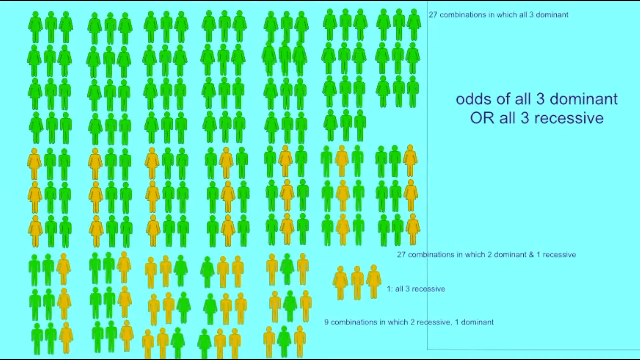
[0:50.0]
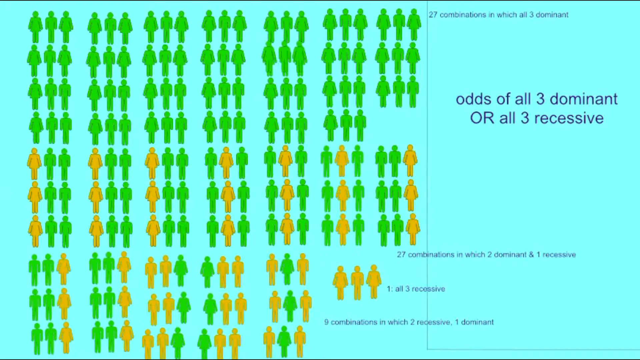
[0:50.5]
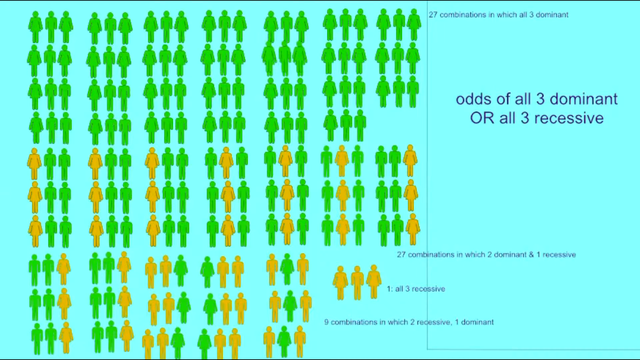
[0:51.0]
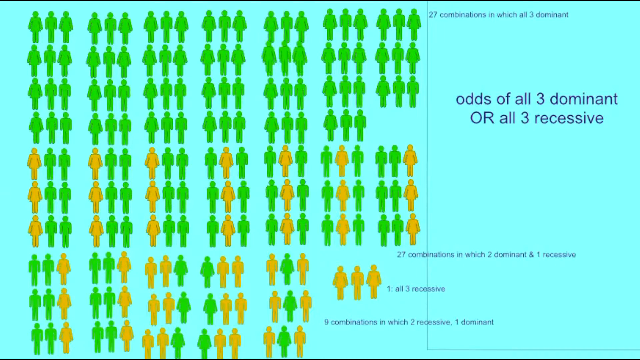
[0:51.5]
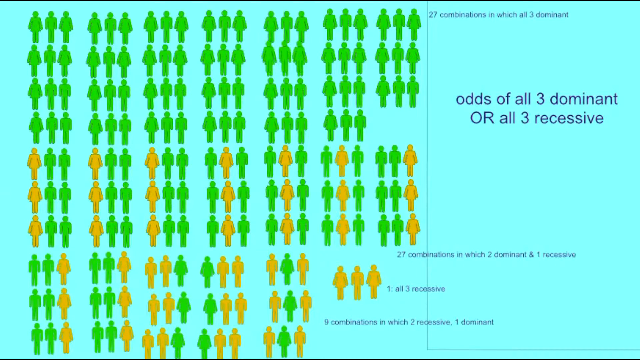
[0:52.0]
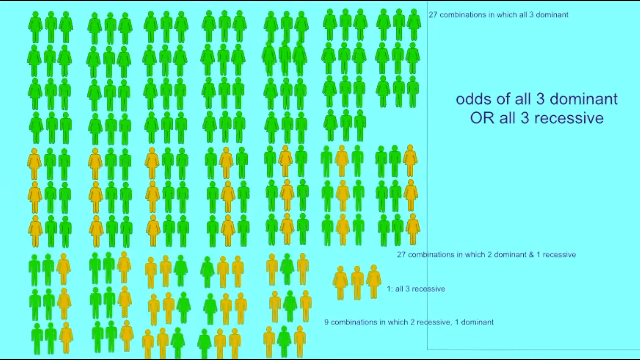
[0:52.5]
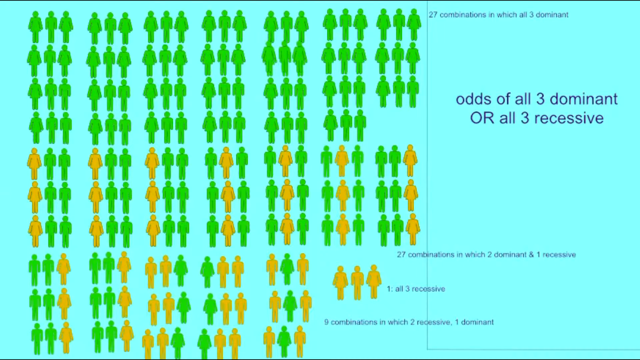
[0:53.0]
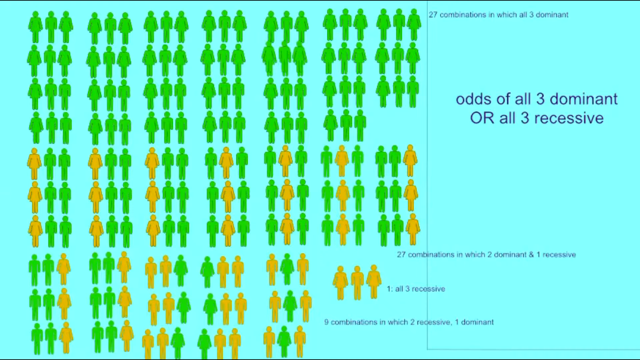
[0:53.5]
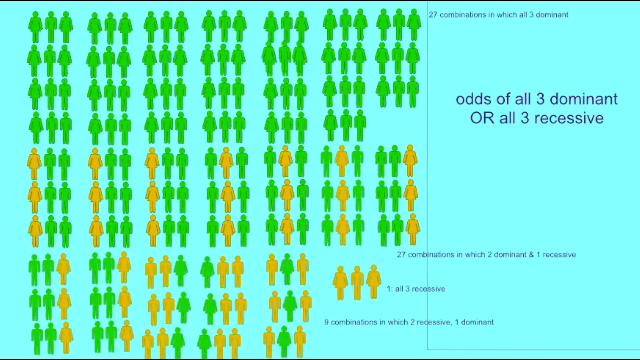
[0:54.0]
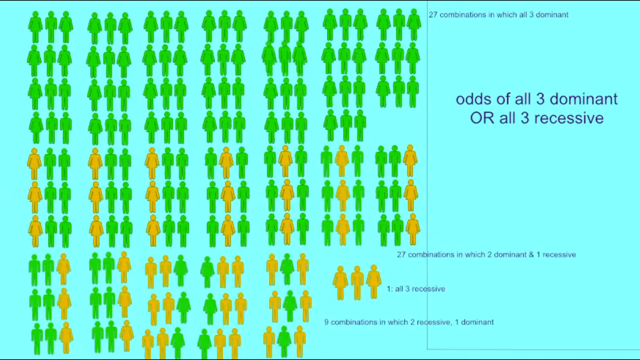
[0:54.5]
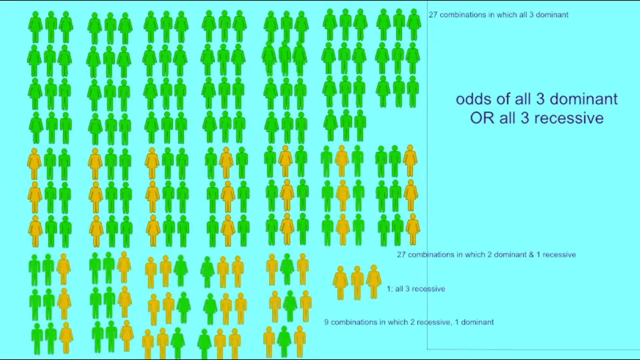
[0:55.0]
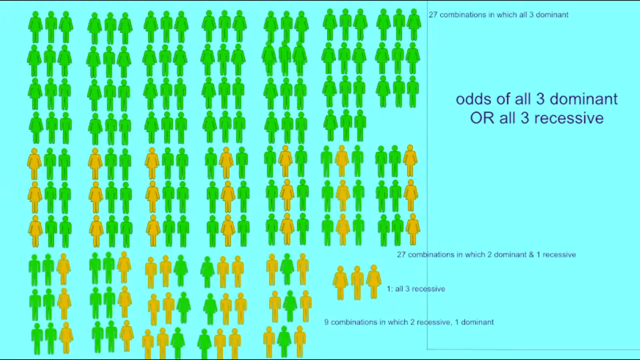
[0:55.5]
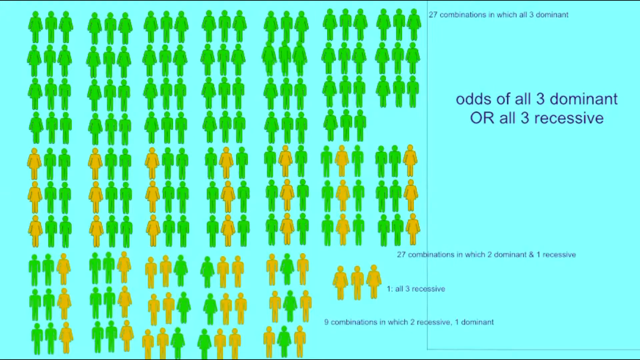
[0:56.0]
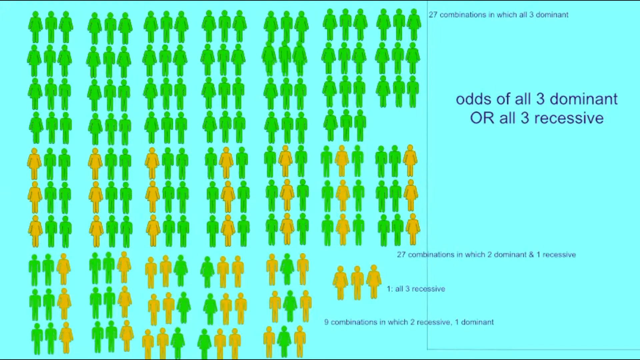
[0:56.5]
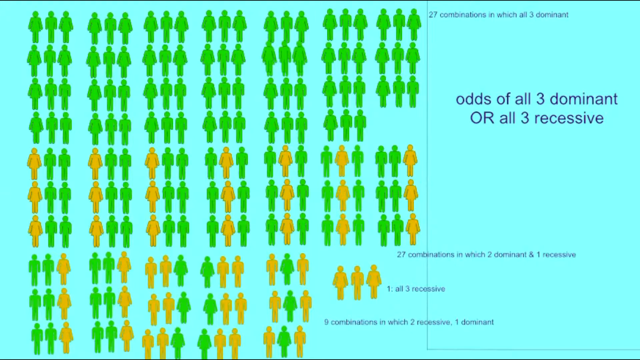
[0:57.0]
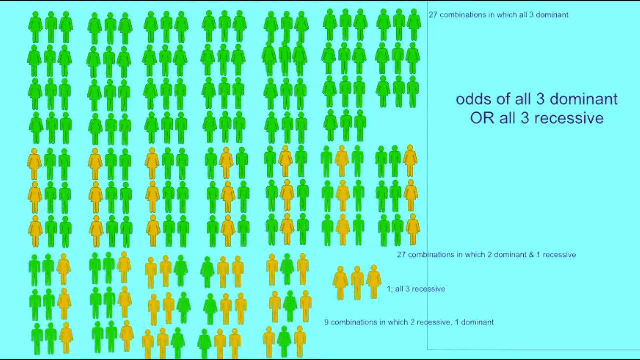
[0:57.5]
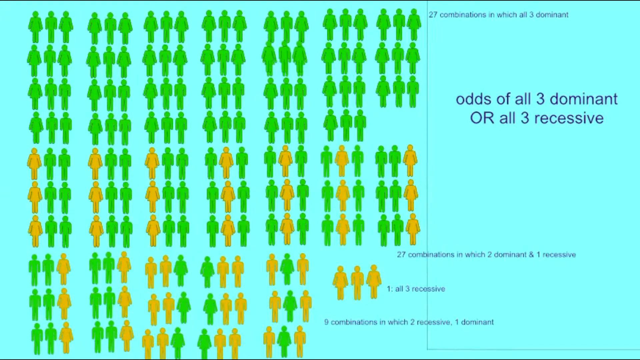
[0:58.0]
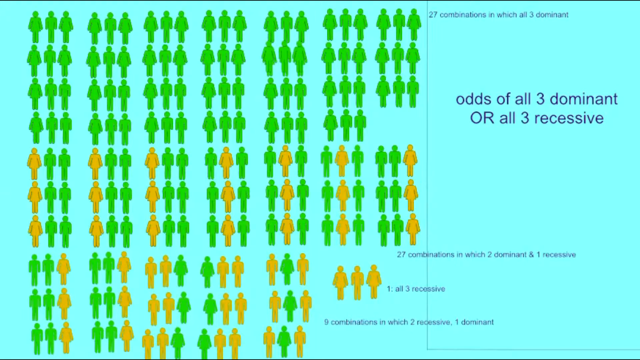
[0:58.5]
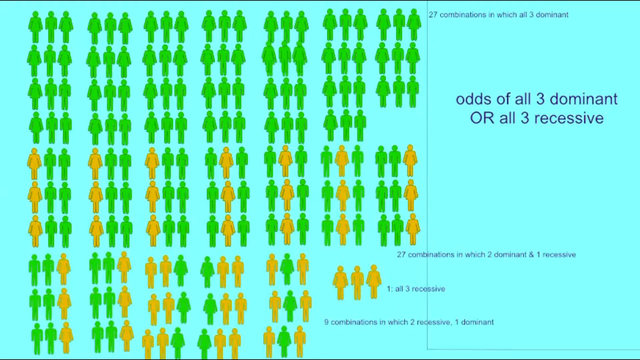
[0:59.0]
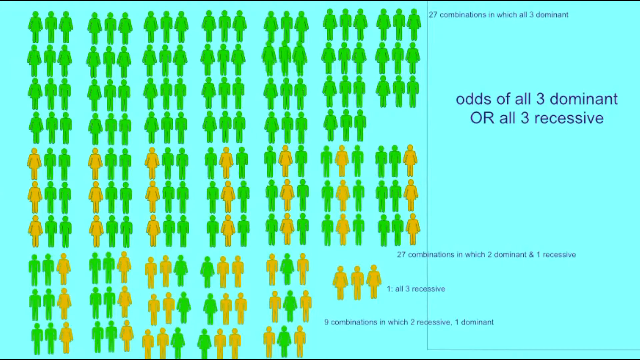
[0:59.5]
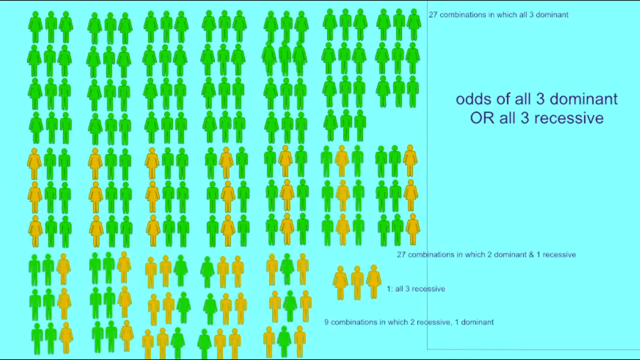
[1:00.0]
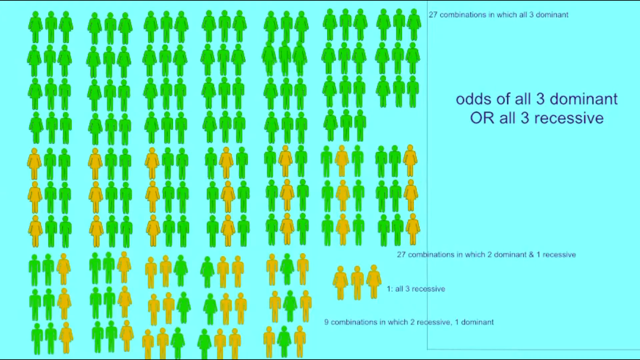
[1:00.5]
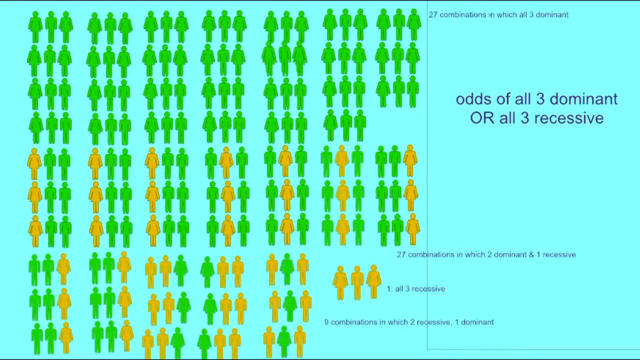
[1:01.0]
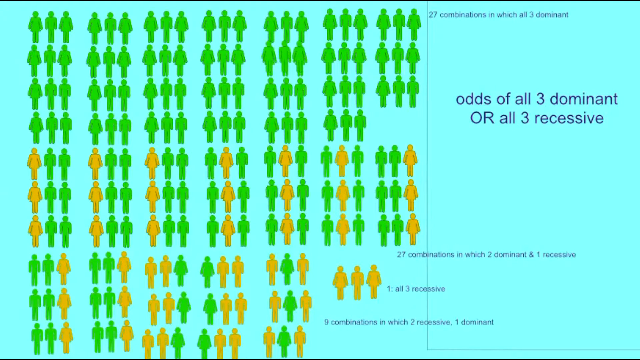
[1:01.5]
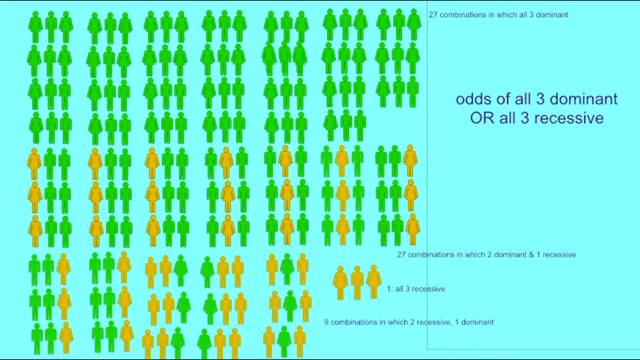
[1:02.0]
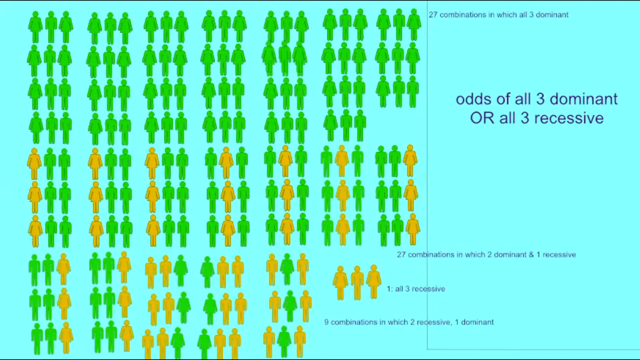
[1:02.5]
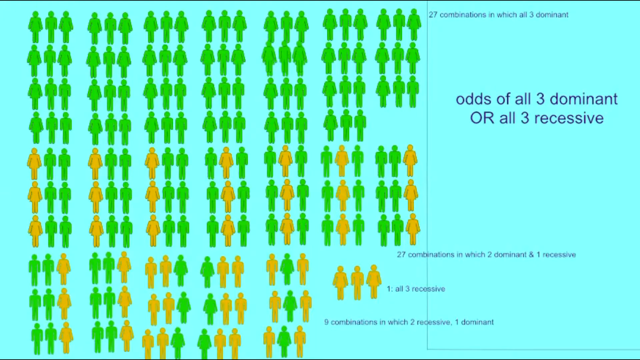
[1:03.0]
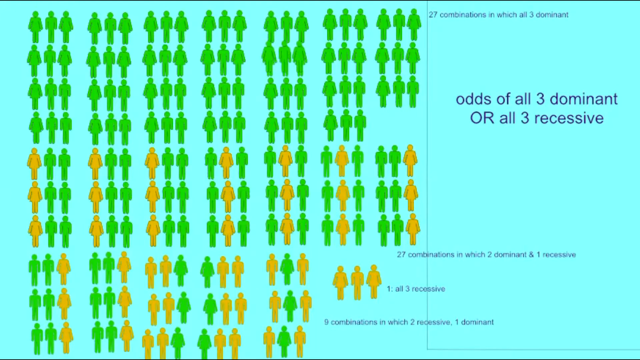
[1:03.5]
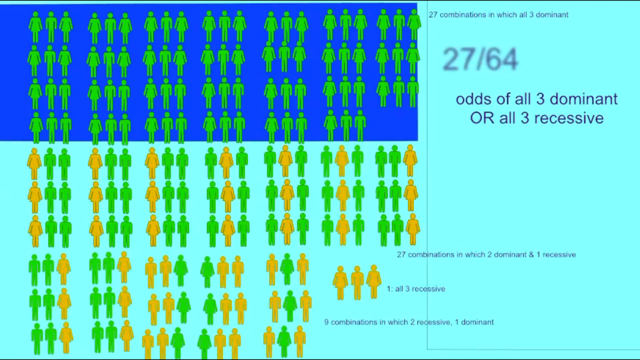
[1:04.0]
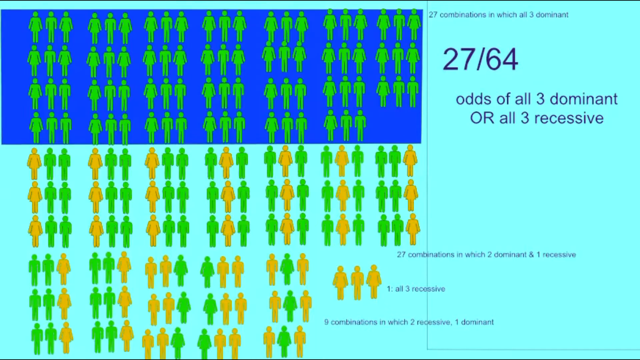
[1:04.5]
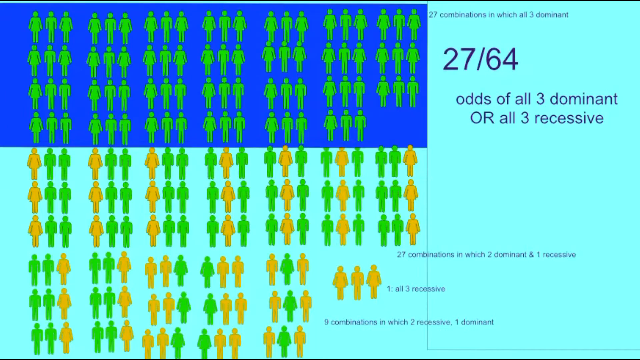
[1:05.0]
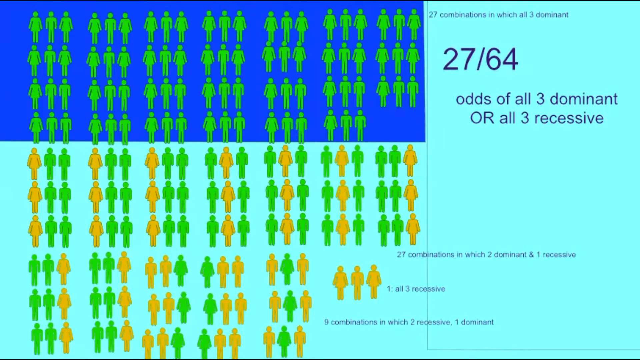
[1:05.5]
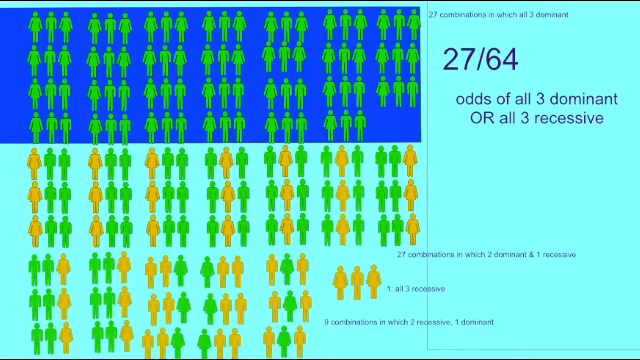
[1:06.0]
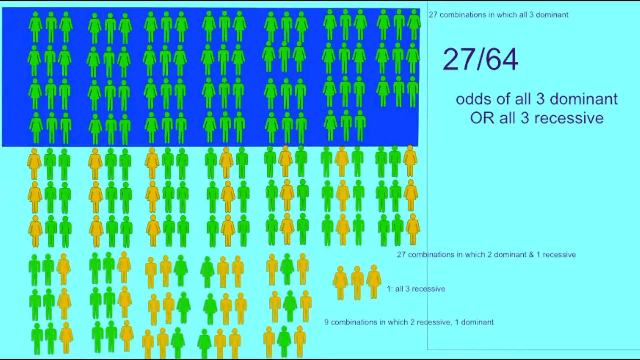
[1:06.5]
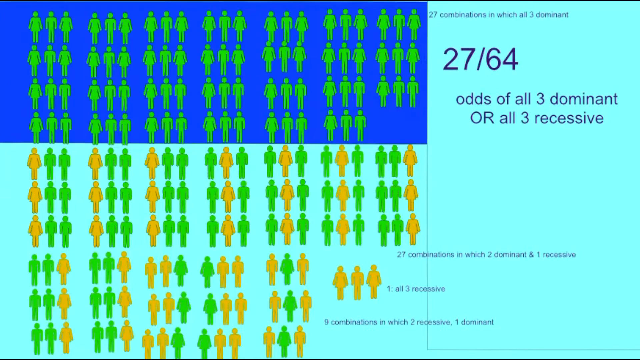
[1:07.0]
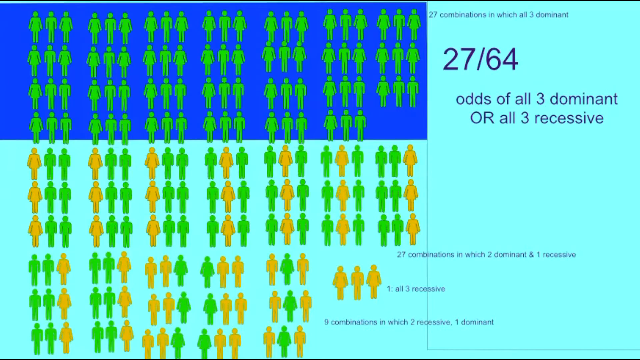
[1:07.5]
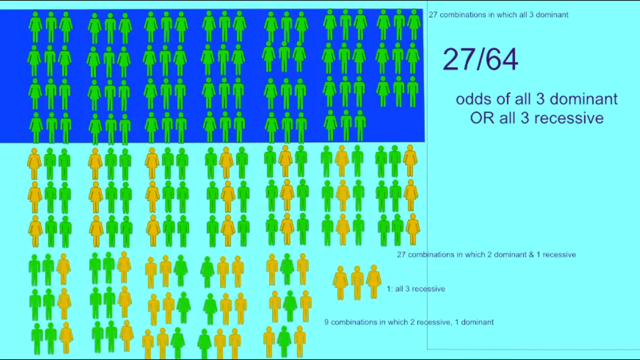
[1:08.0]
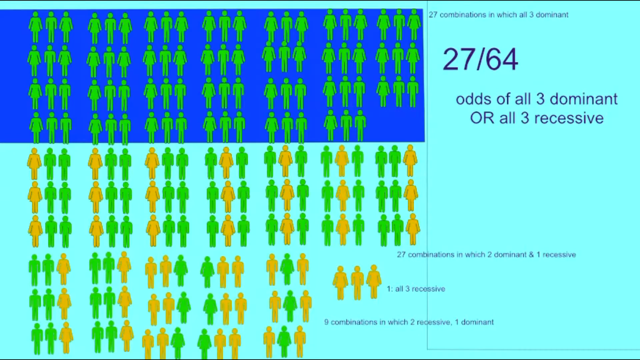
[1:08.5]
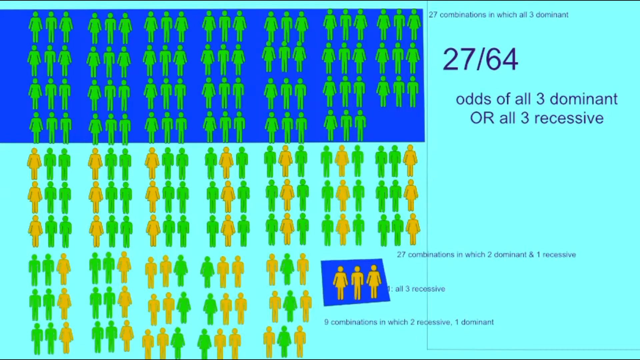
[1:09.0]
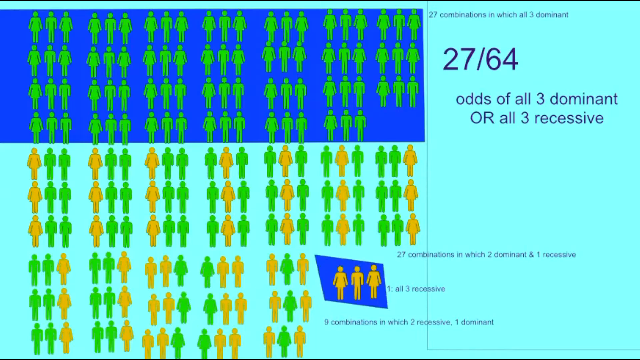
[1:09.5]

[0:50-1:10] The focus stays on this page of dominant and recessive combinations in different orders. The 27 fully dominant combinations of three are highlighted, along with the one fully recessive combination, showing 1 out of 64 versus 27 out of 64. The figures have different body sizes: those at the bottom are more like stick figures with less body detail, while those at the top have different shapes and sizes. A light blue background sets off the green and orange colors, and everything is drawn and laid out very neatly, apparently by computer.